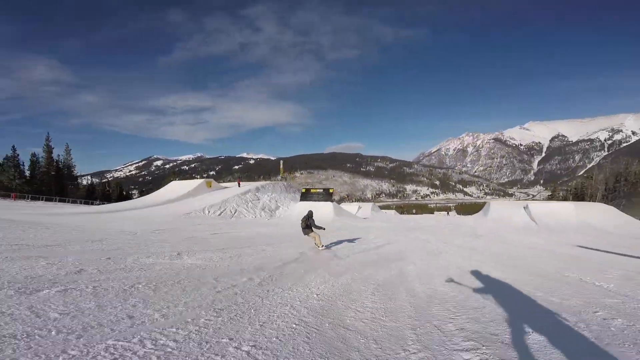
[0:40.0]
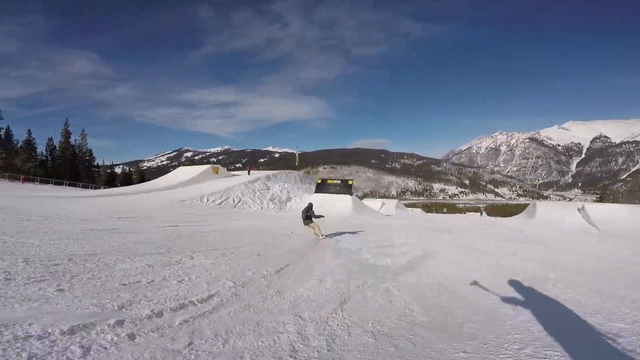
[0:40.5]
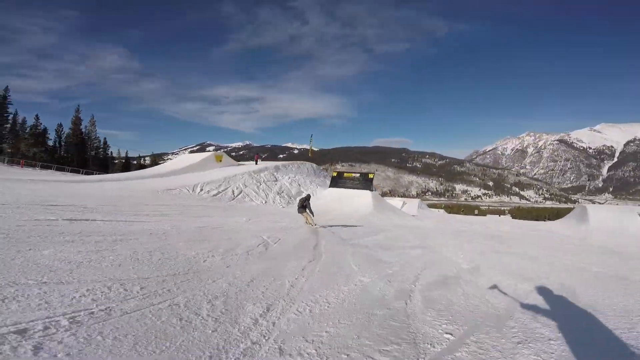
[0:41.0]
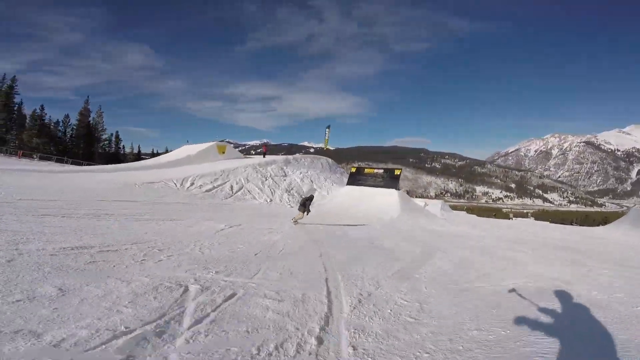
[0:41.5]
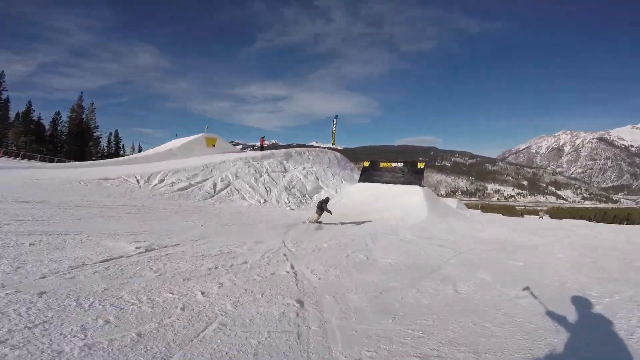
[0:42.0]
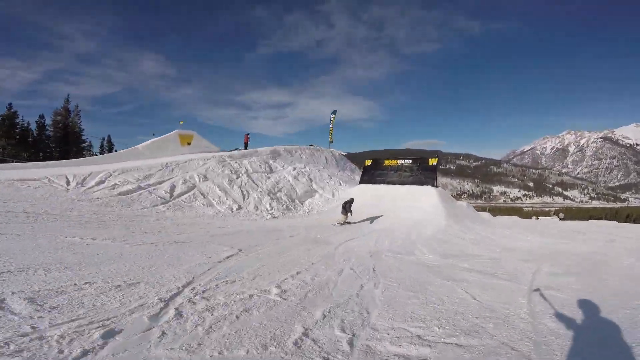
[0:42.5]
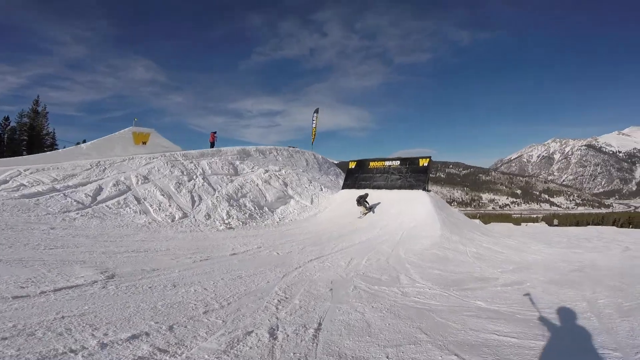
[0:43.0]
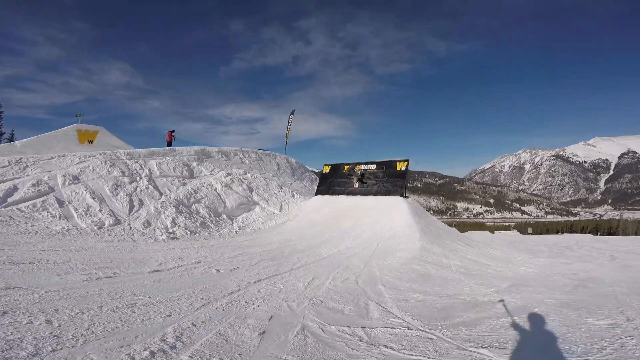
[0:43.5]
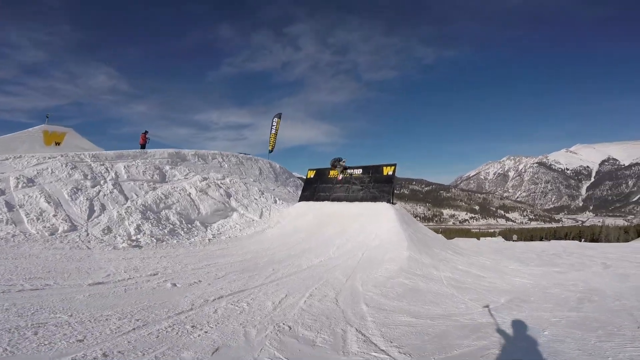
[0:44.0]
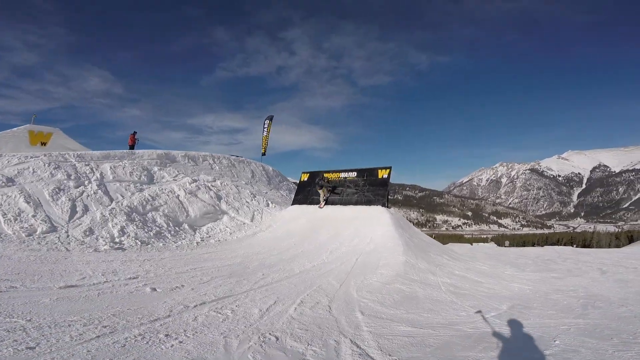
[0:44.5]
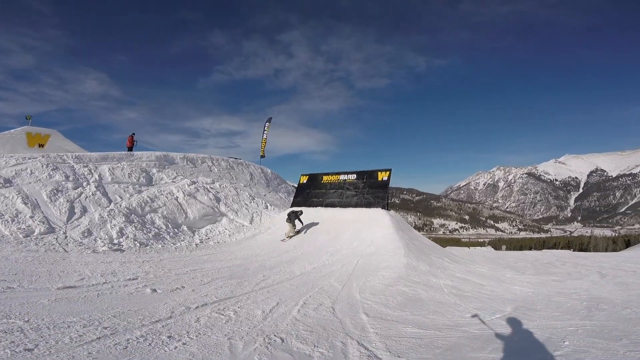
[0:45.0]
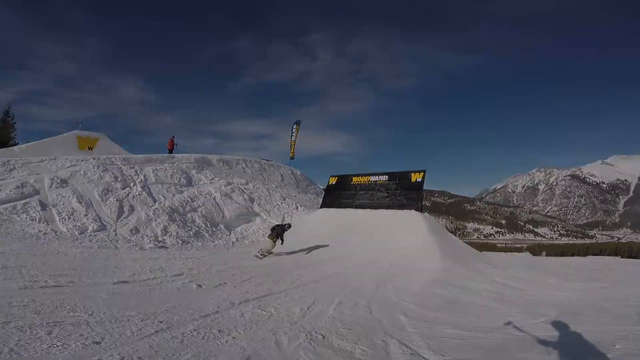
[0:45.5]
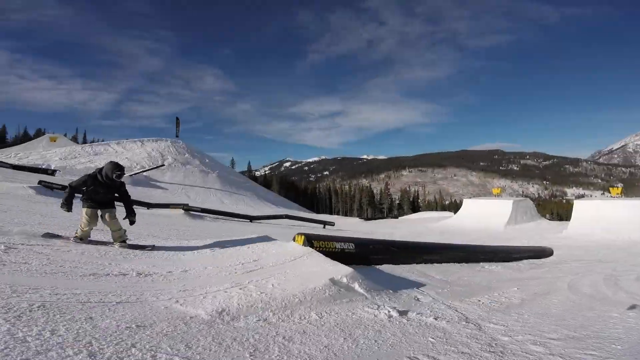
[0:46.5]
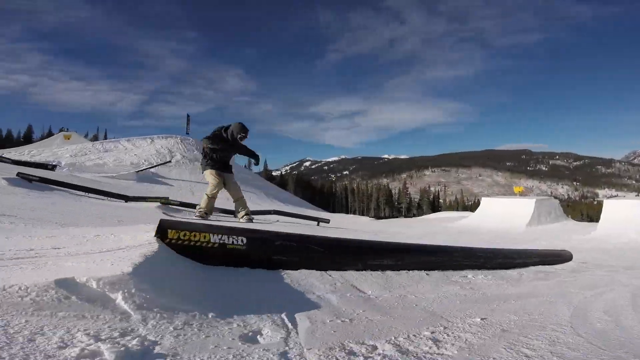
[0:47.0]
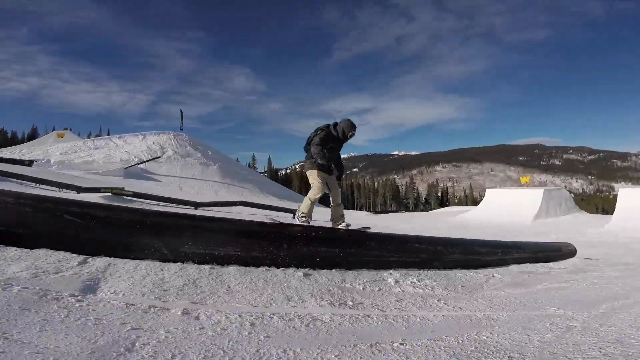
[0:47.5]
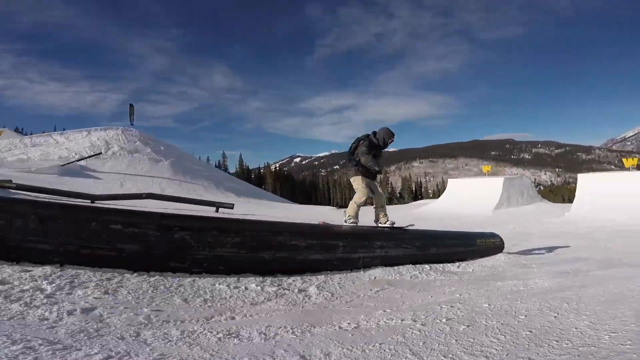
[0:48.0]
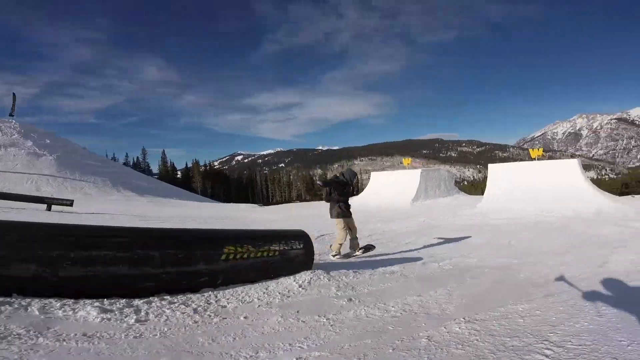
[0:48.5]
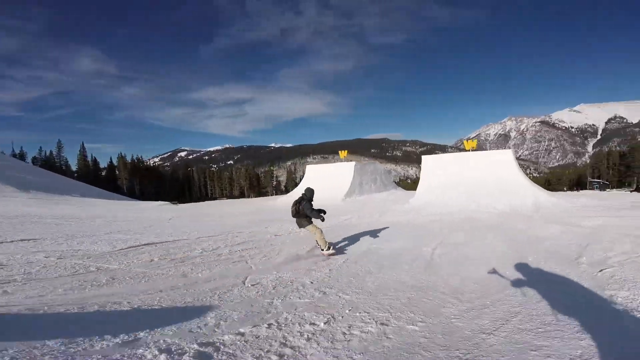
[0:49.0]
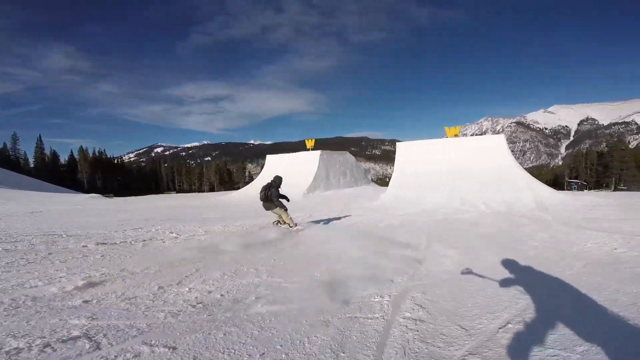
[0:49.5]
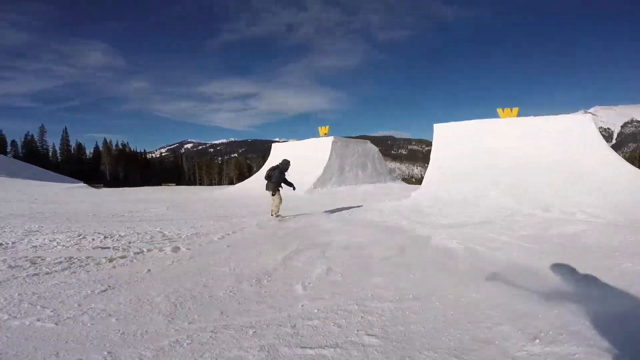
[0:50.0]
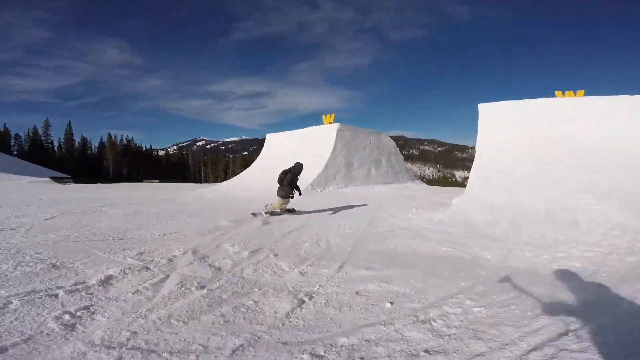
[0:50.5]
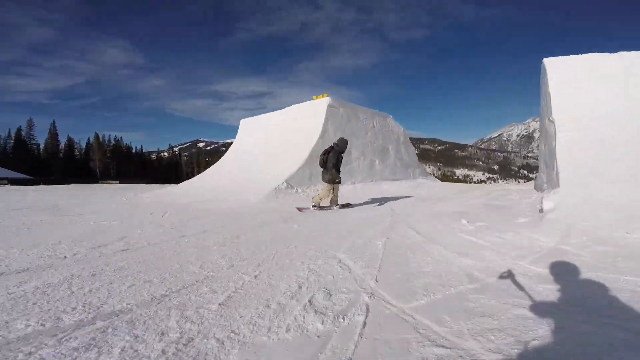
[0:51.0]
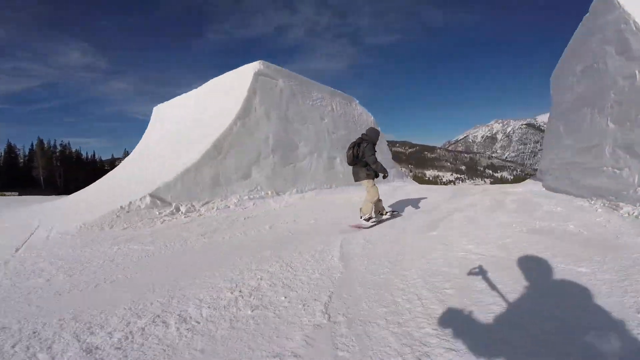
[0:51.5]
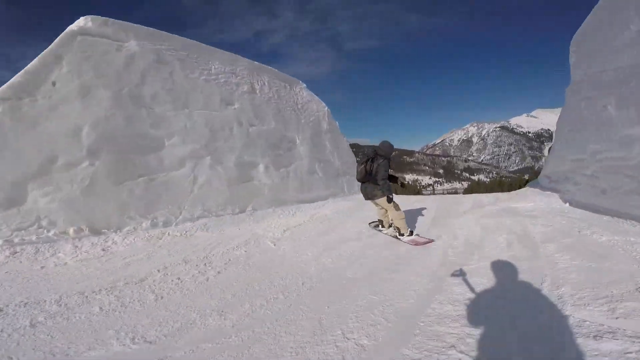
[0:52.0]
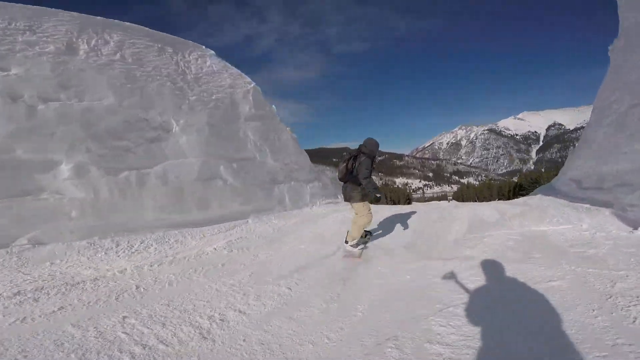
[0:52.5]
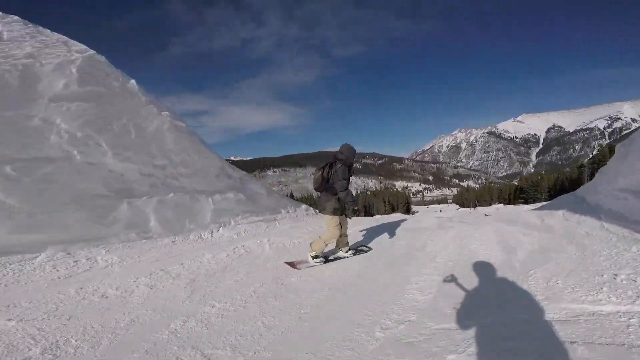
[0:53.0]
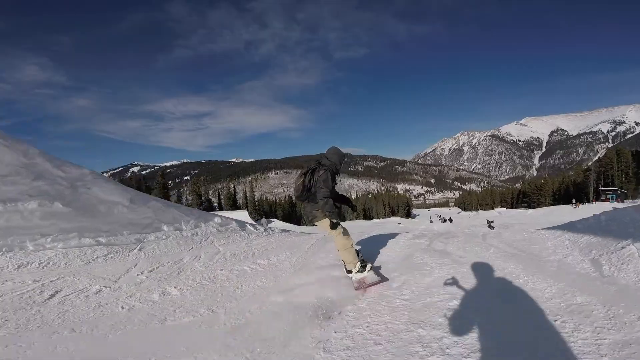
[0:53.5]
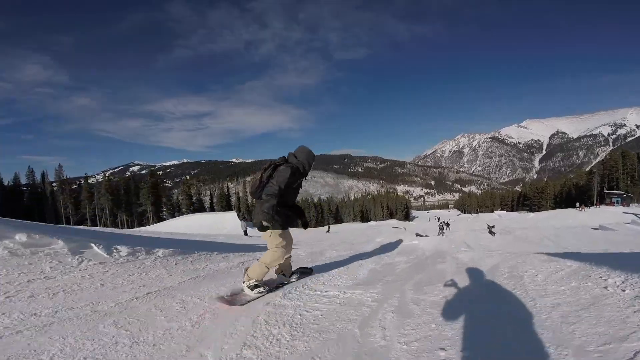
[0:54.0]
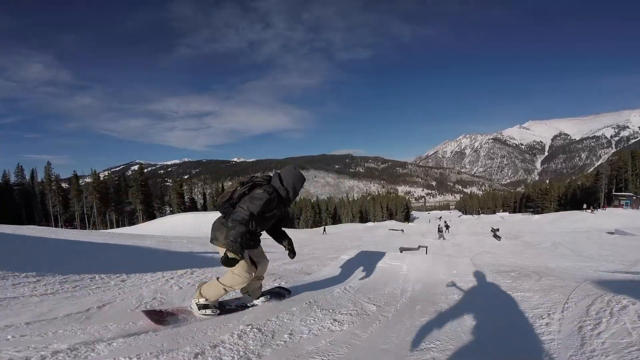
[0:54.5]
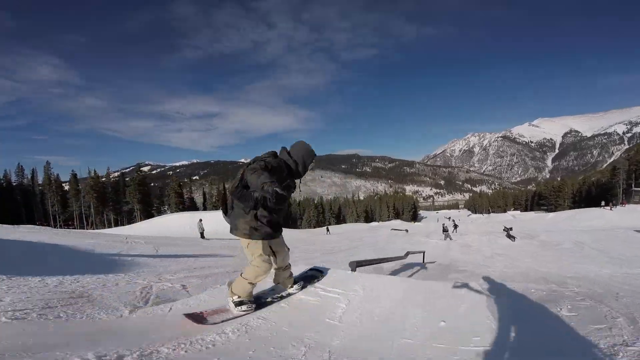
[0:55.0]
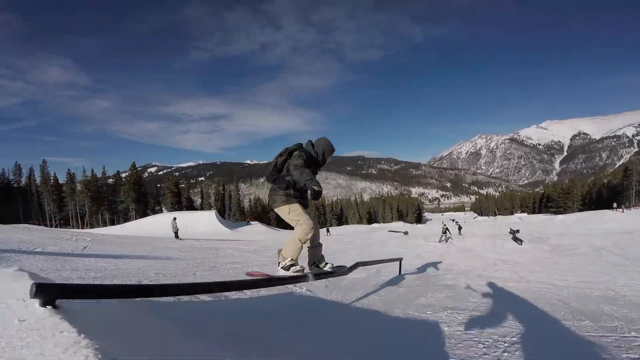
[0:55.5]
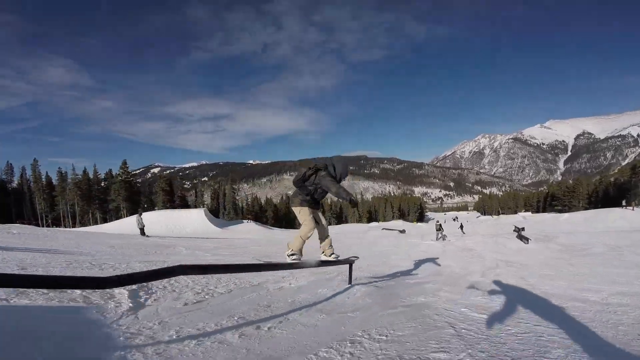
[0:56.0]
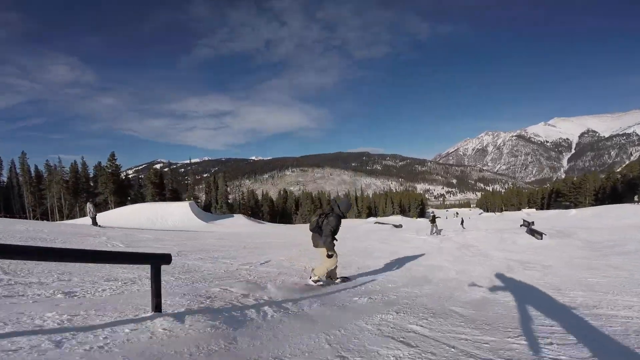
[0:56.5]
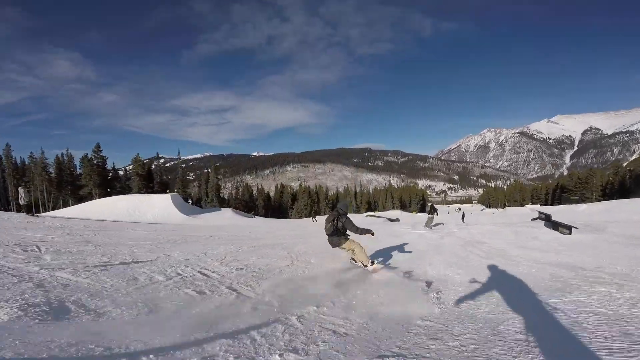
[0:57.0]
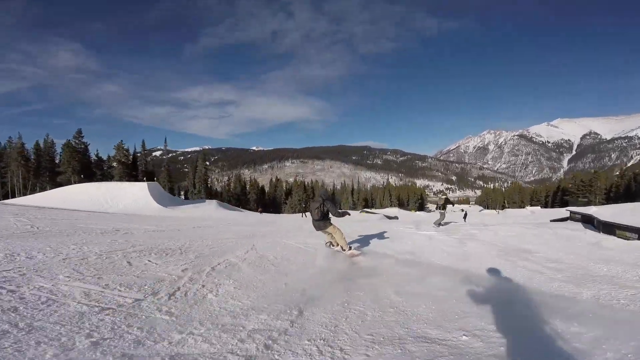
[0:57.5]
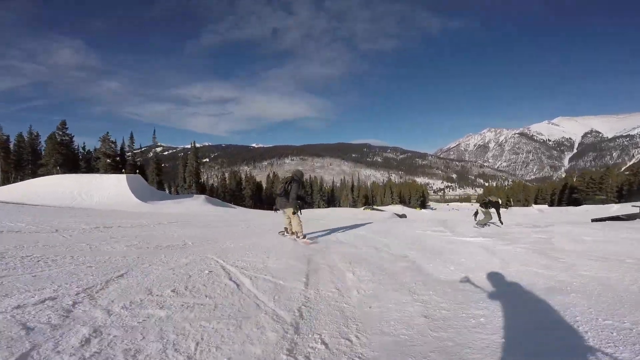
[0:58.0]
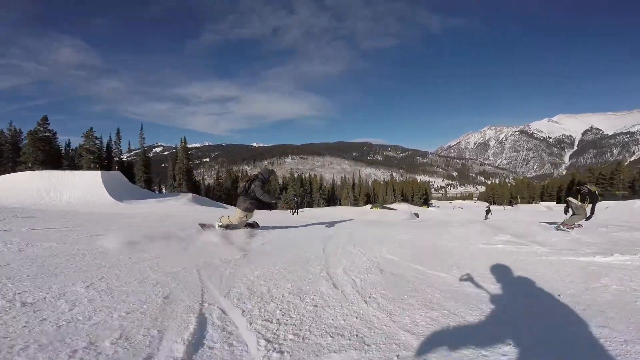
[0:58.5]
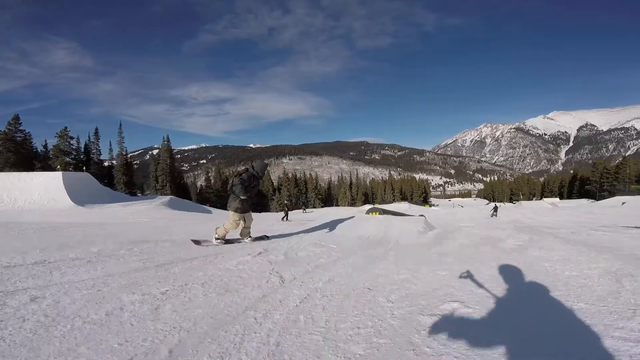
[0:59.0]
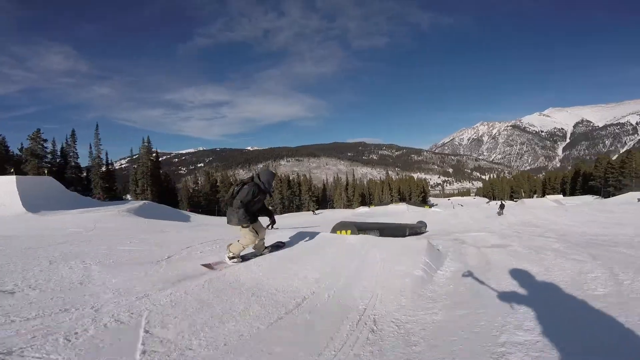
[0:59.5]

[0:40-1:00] Someone on a snowboard goes down a hill toward some ramps that have been set up in the snow. He goes up and over one tall ramp with a black barrier on top, which has W's on both sides. He rides right up to the top of it, catches it in the center, and comes back down the slope. In another shot he comes up across a big black pipe that slopes downhill and skis across it toward another set of ramps. He goes between those two ramps, missing both of them, while moving forward. He then goes up and slides across another pipe, a much thinner one with an angle in the middle. He comes off the edge of it onto the ground and heads toward some other snowboarders on the snow in front of him. He turns back to the left, back to the right, goes up a ramp, and slides across another big black pipe.